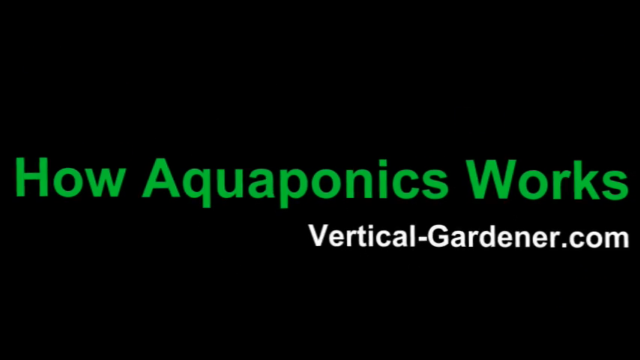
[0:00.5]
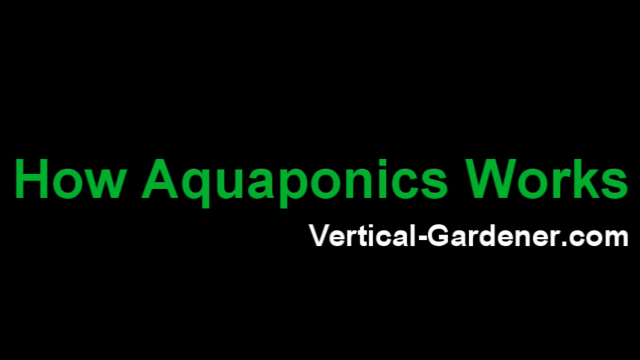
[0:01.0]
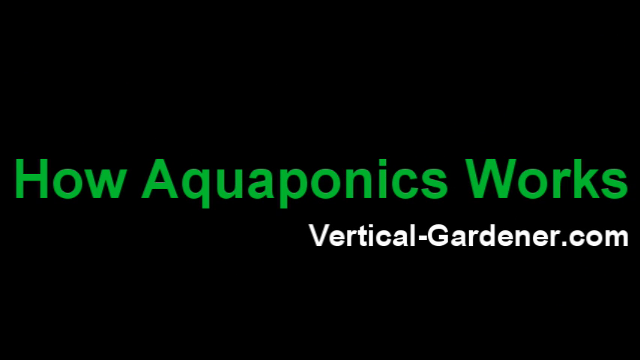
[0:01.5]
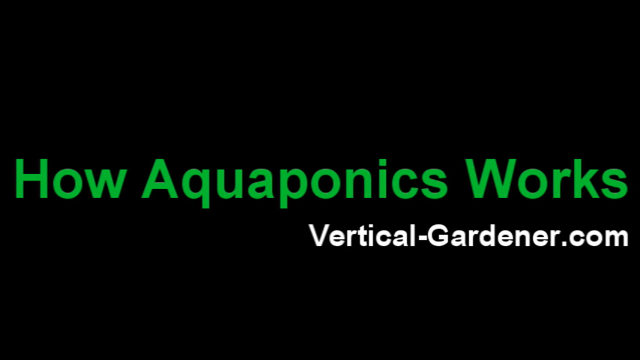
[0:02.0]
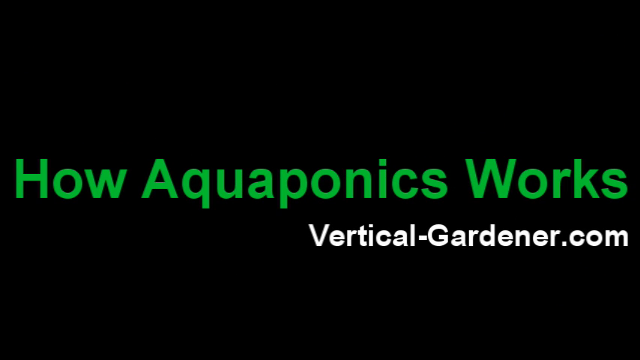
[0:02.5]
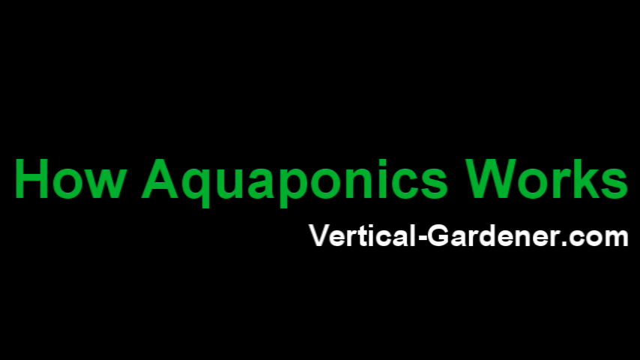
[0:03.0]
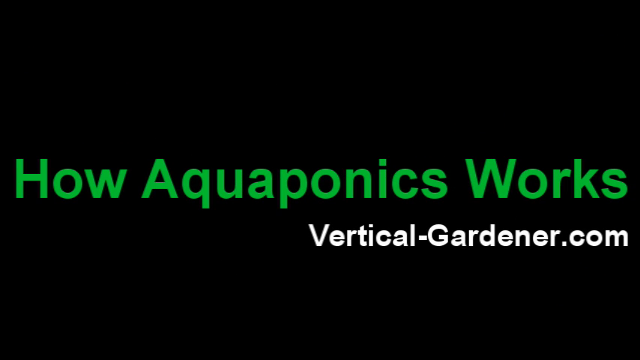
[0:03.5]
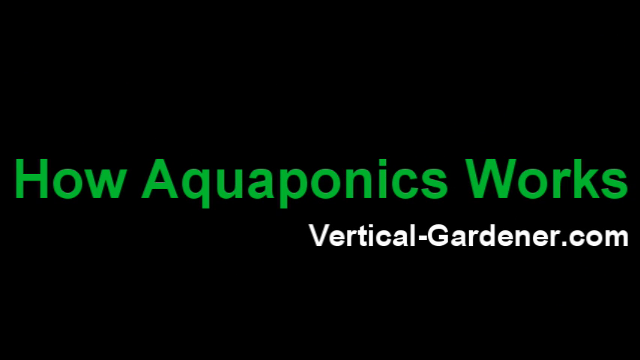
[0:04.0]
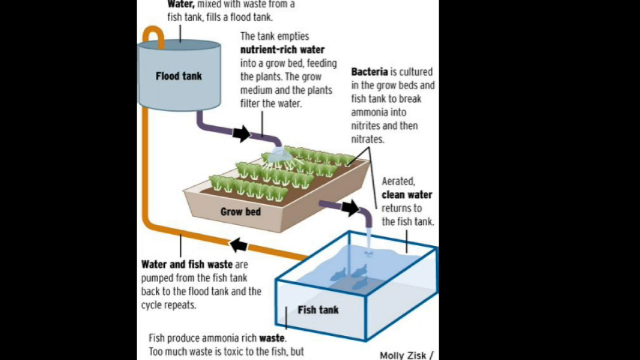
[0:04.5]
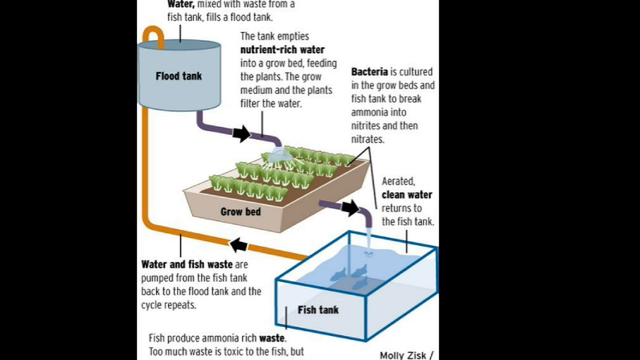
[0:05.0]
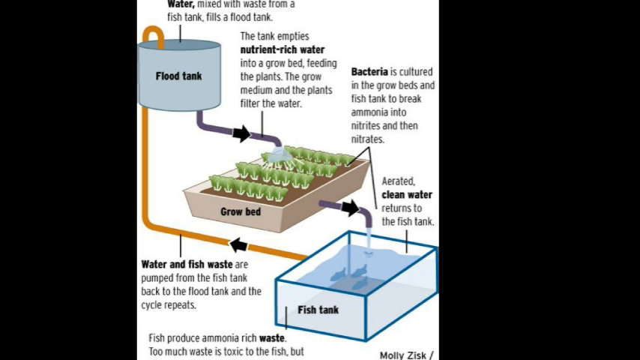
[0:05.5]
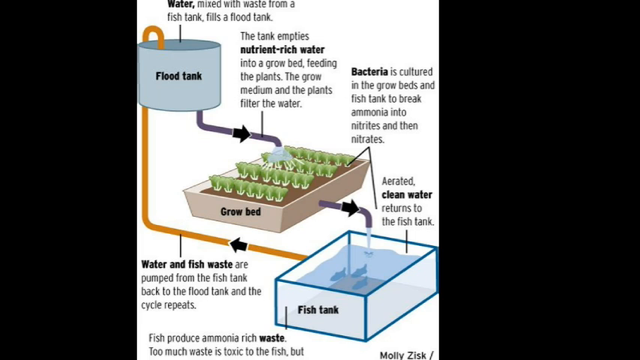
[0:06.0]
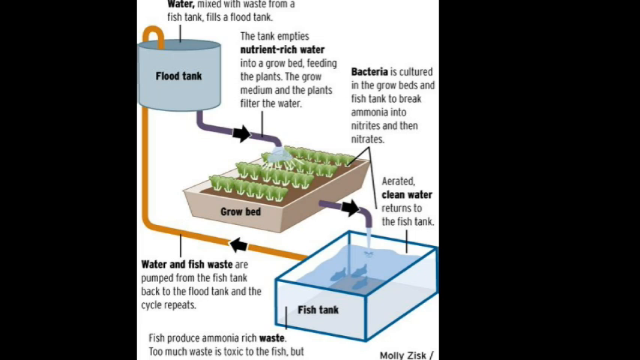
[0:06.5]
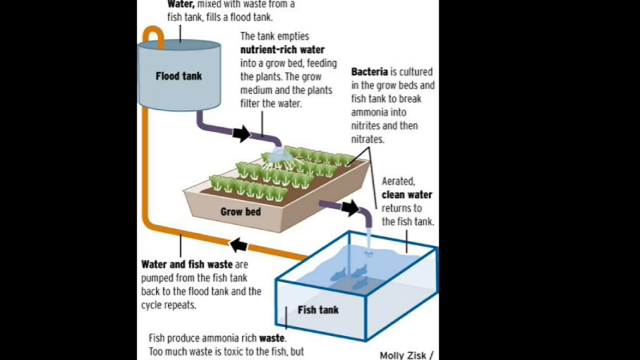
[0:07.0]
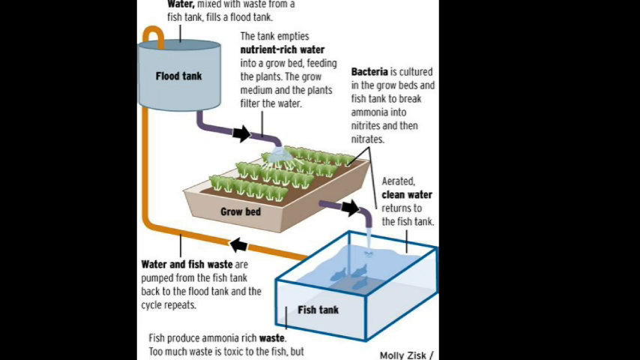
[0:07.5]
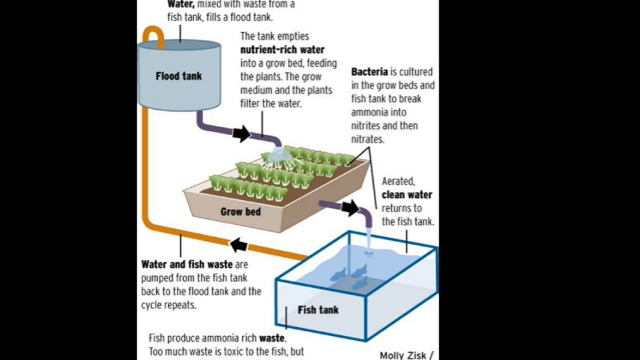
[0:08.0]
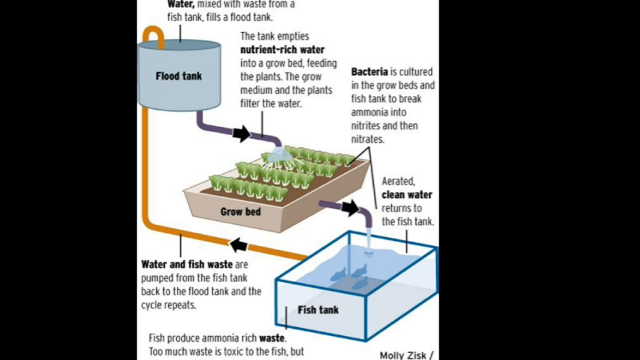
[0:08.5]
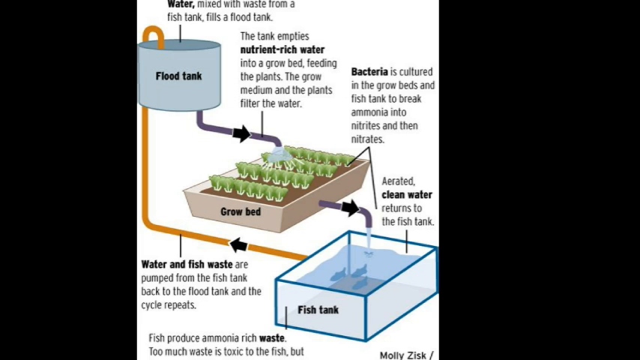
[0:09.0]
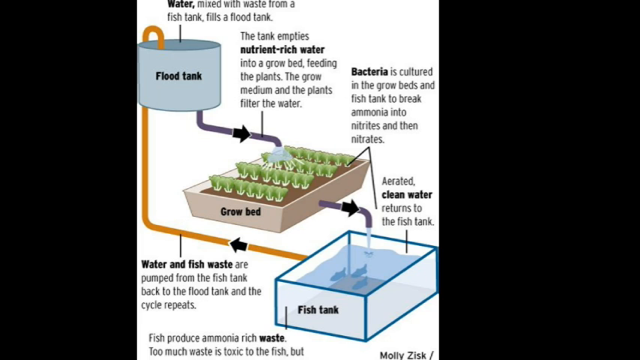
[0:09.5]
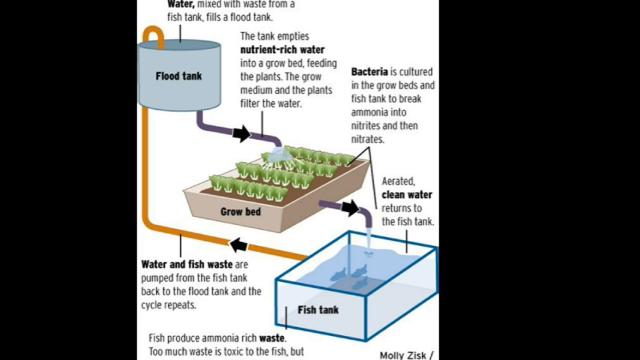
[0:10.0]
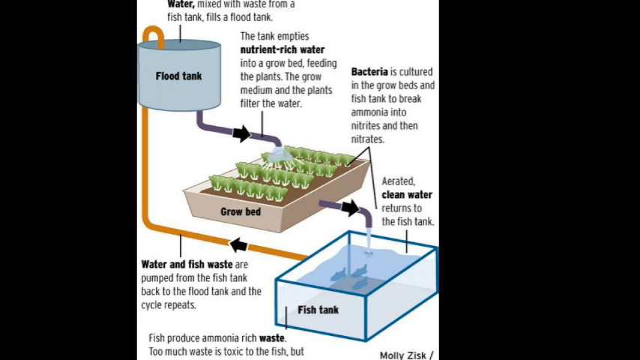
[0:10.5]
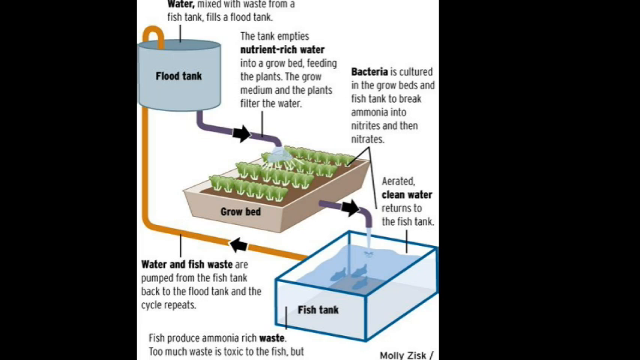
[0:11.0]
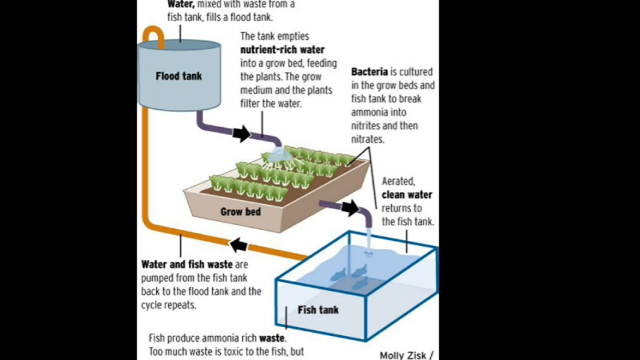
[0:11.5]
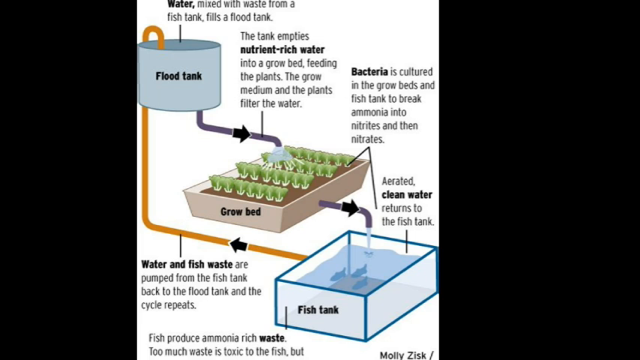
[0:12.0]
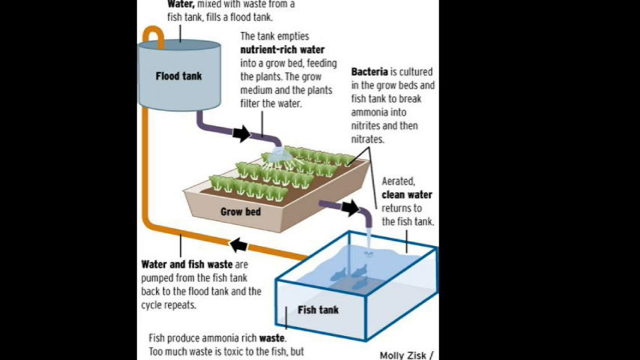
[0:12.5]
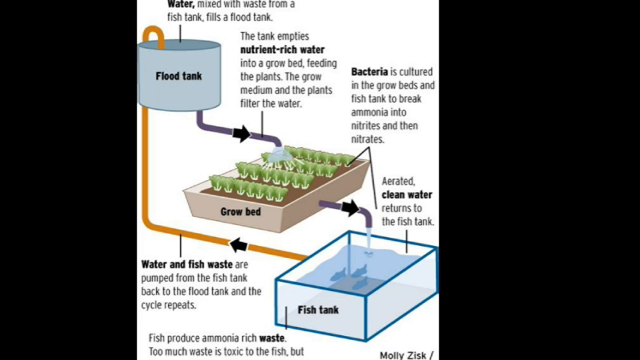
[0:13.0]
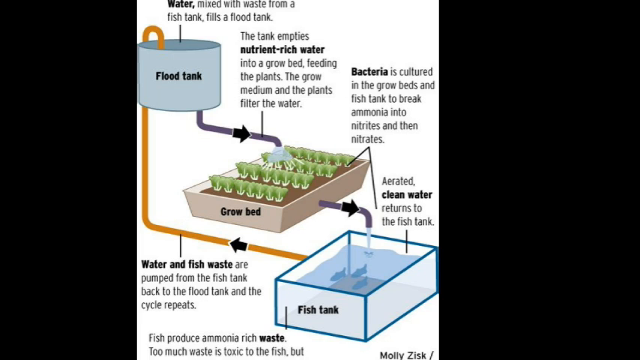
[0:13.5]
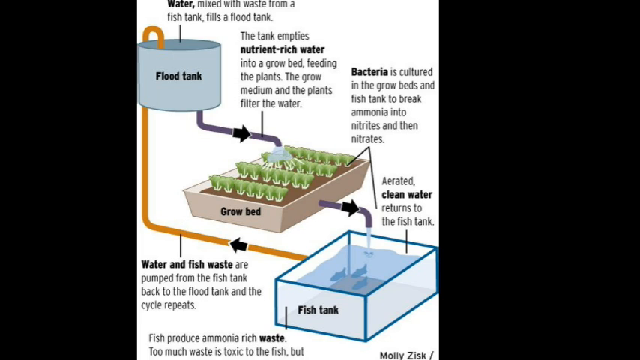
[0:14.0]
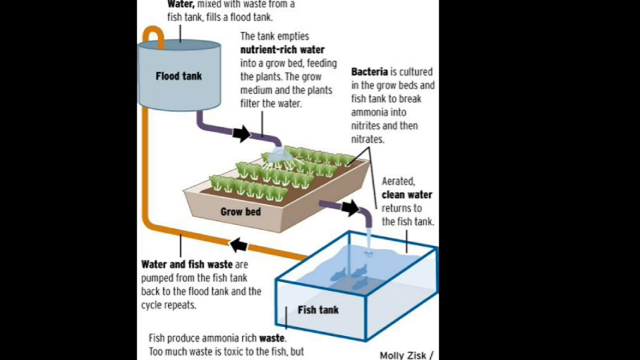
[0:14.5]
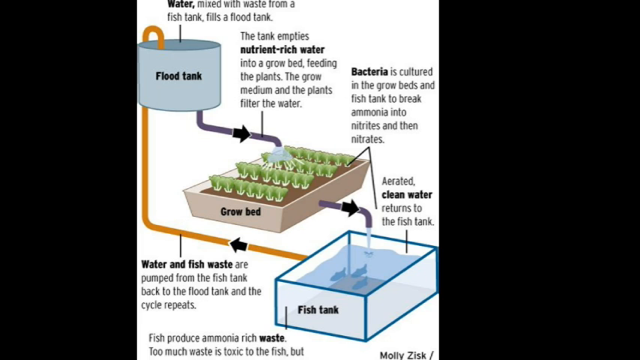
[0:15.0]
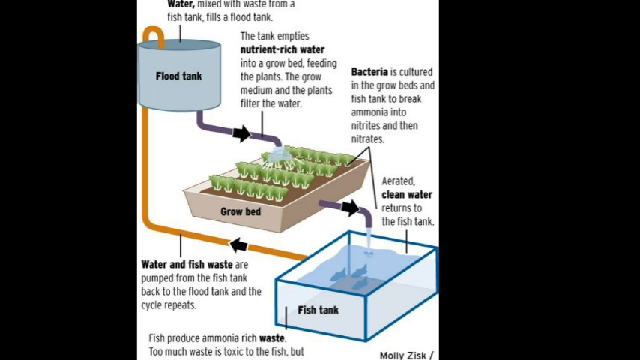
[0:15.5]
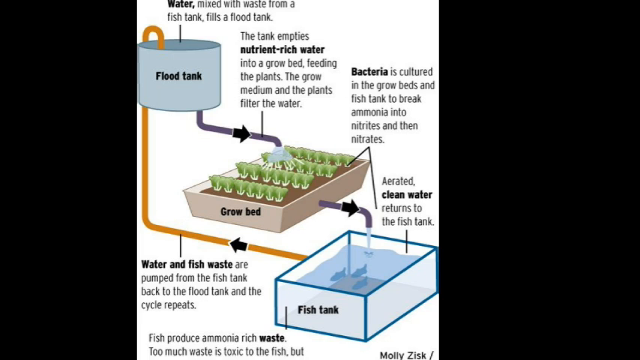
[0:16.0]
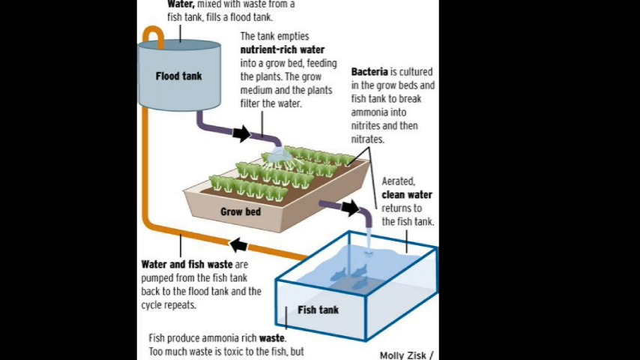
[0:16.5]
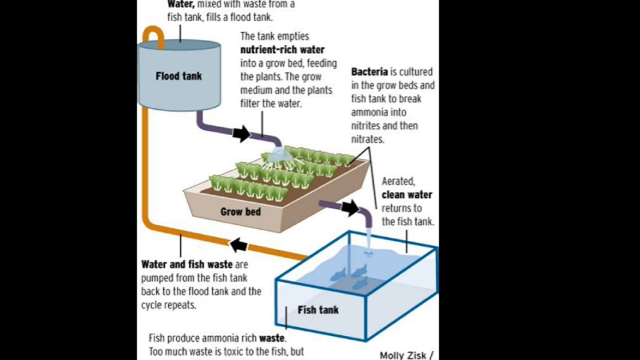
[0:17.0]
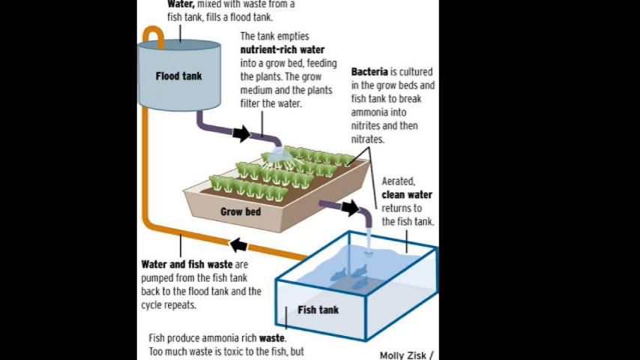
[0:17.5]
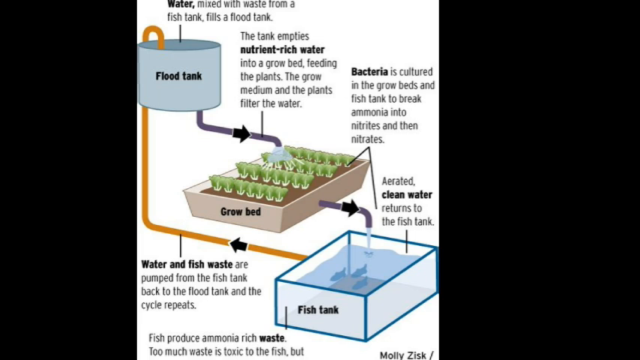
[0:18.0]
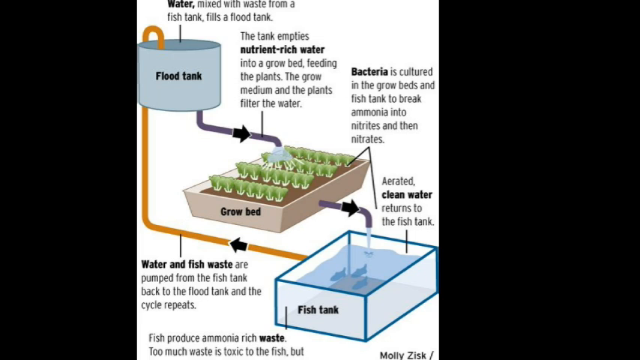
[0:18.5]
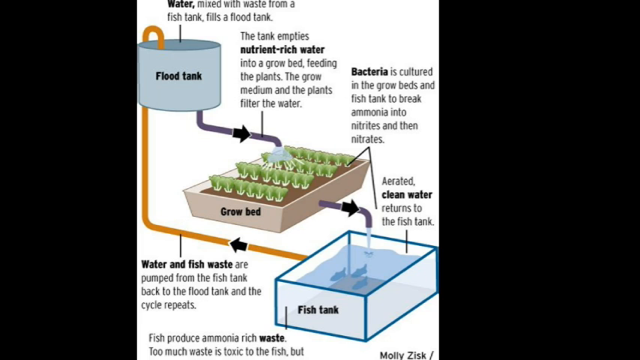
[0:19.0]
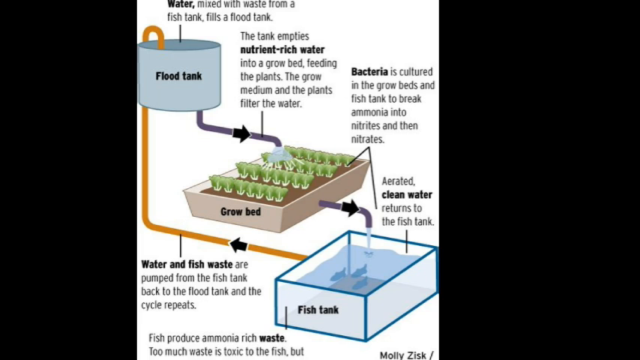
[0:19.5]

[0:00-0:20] The video, How aquaponics works from Verticalgardener.com, presents a diagram of how aquaponics works. The diagram starts with a flood tank, and it says "water mixed with waste from a fish tank fills a flood tank". That water pours into the grow bed: the tank empties nutrient-rich water into a grow bed, feeding the plants, and the grow medium and the plants filter the water. Bacteria is cultured in the grow beds and fish tank to break ammonia into nitrites and then nitrates. From the grow bed, aerated clean water flows back into the fish tank, where the fish are. The diagram then says "the water and fish waste are pumped from the fish tank back to the flood tank", and the cycle repeats.